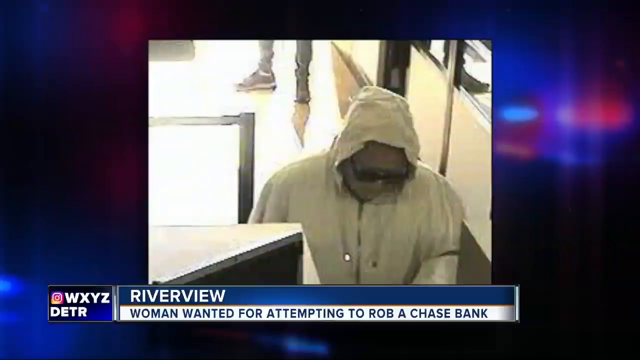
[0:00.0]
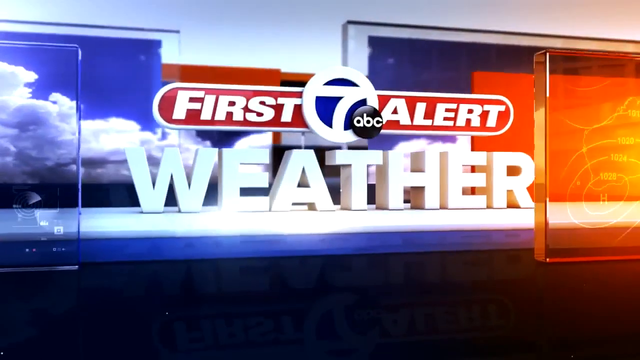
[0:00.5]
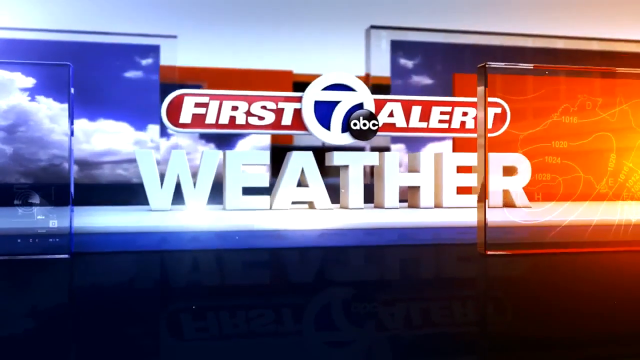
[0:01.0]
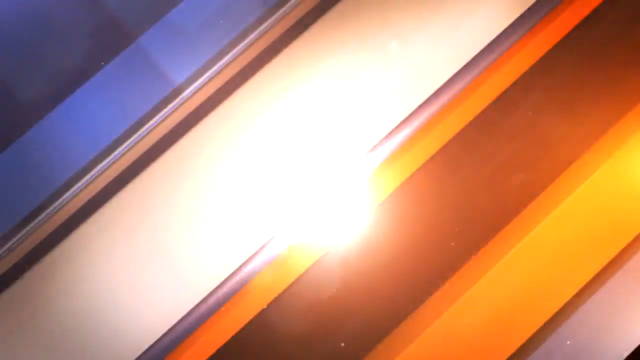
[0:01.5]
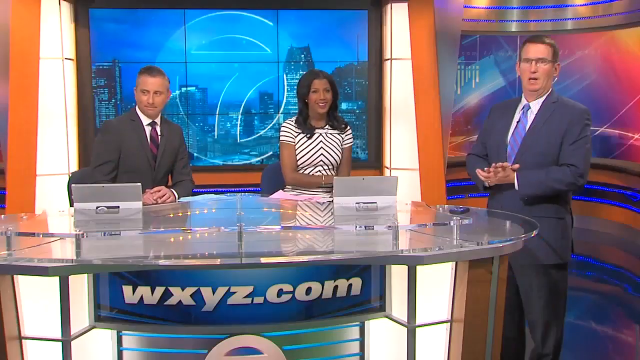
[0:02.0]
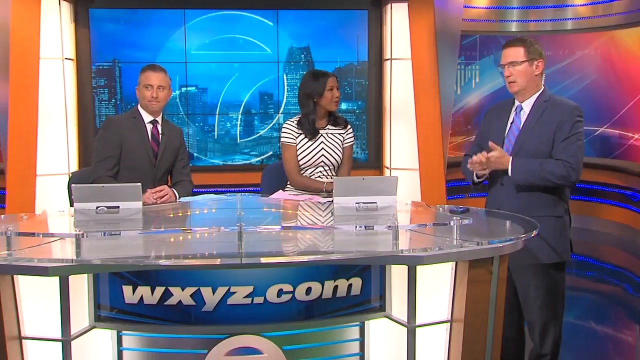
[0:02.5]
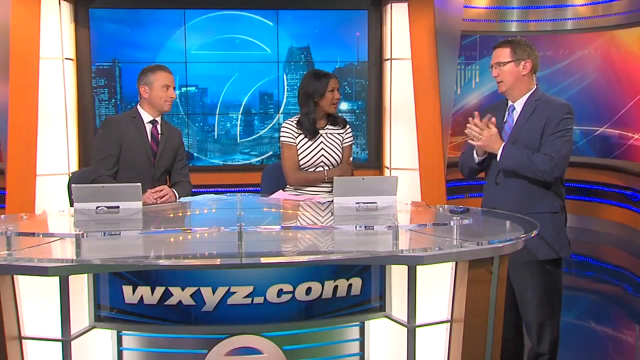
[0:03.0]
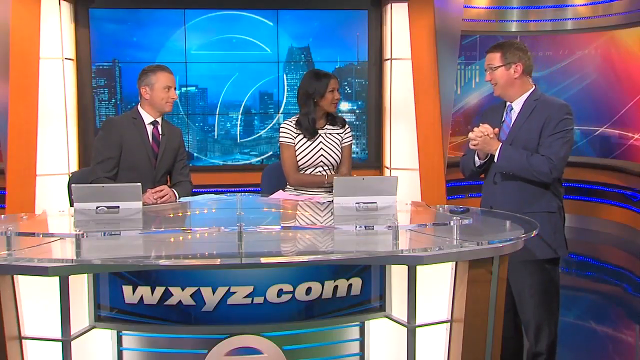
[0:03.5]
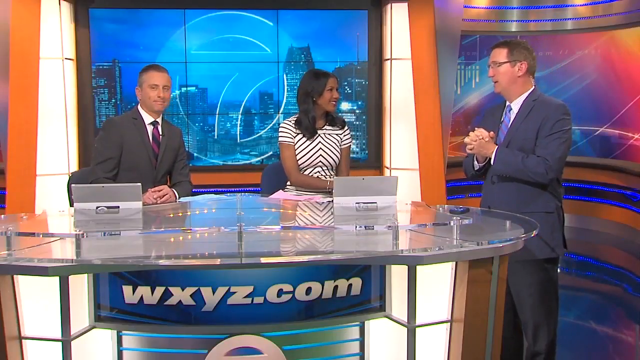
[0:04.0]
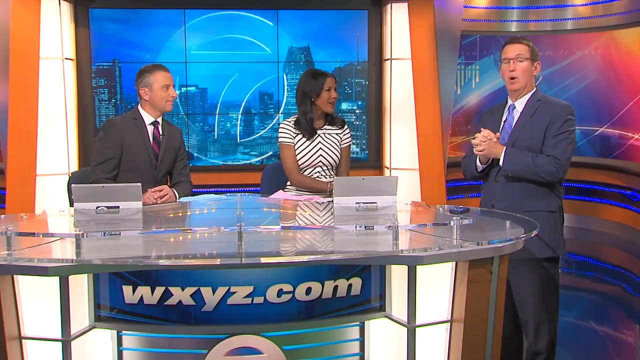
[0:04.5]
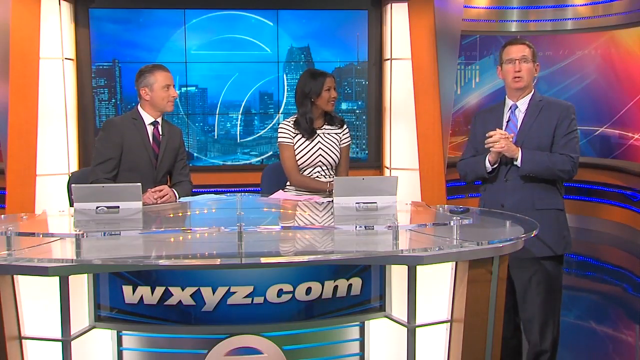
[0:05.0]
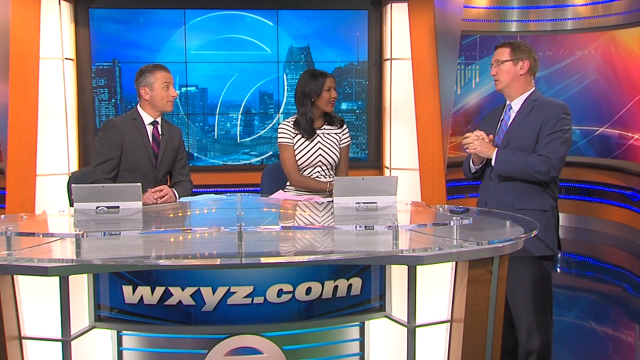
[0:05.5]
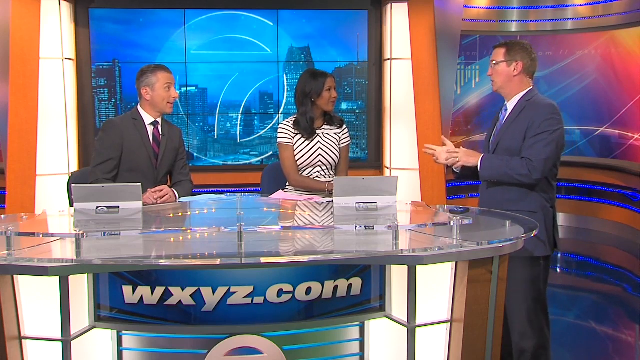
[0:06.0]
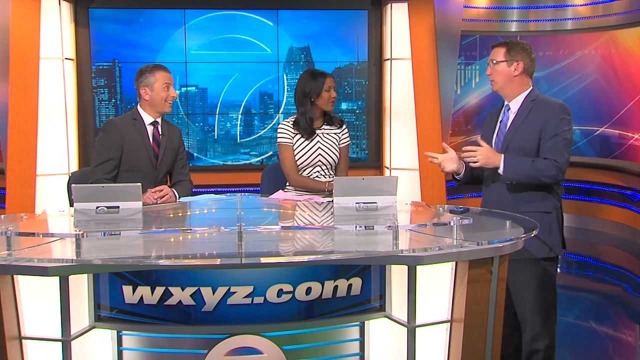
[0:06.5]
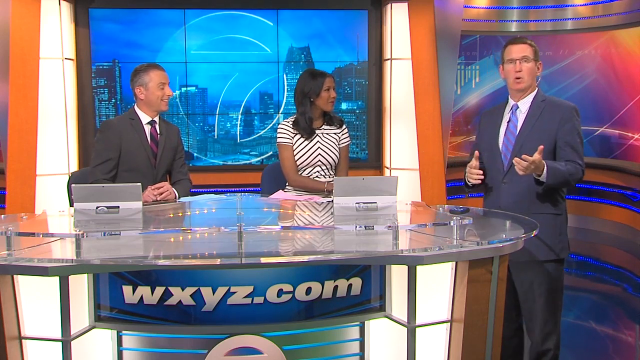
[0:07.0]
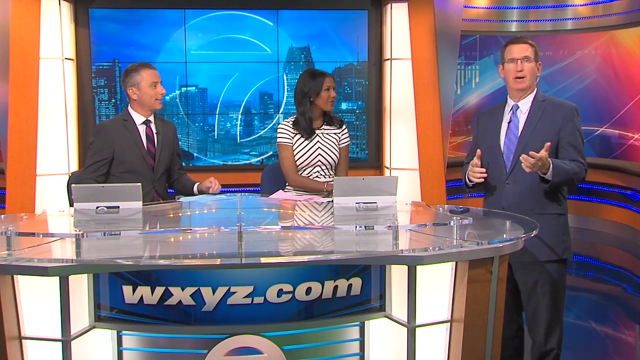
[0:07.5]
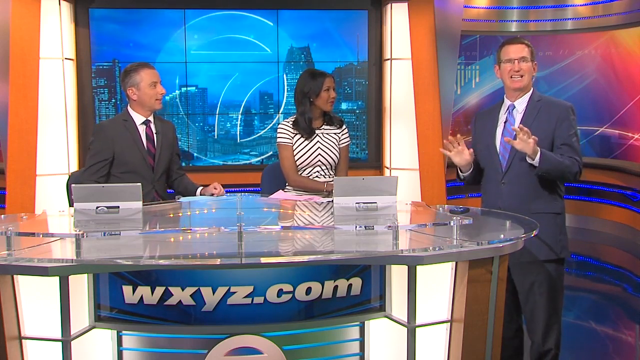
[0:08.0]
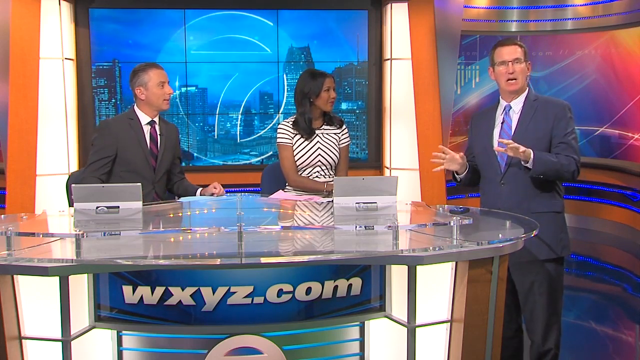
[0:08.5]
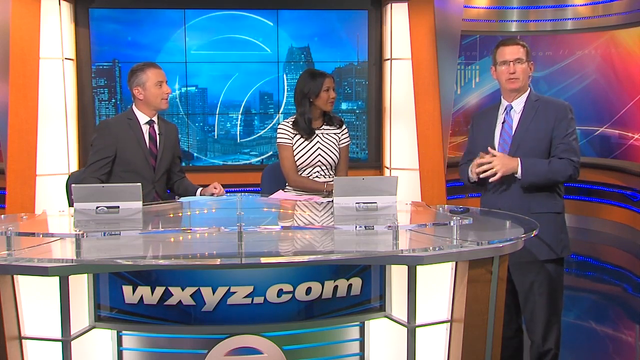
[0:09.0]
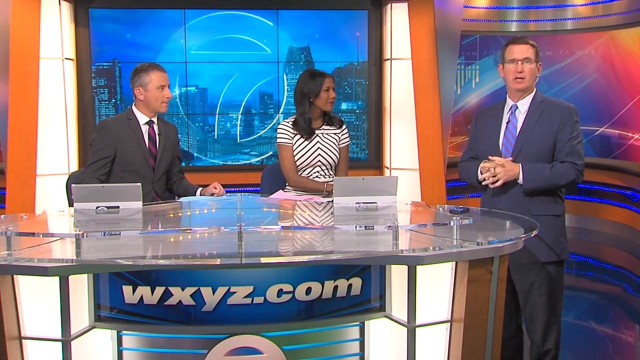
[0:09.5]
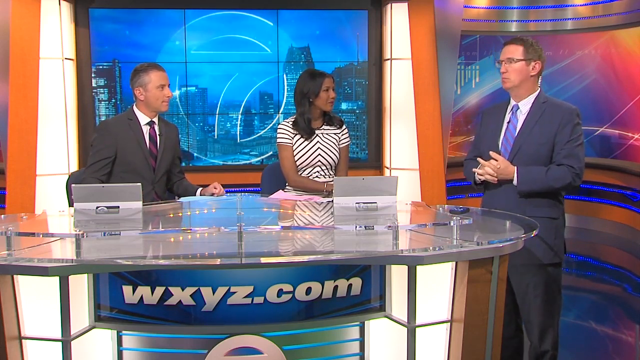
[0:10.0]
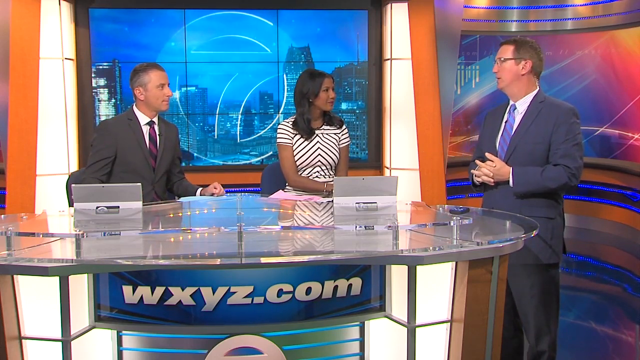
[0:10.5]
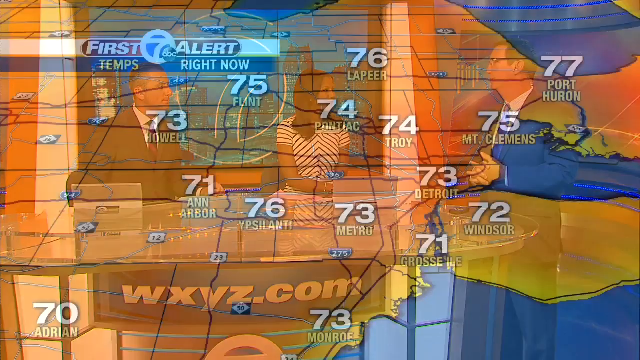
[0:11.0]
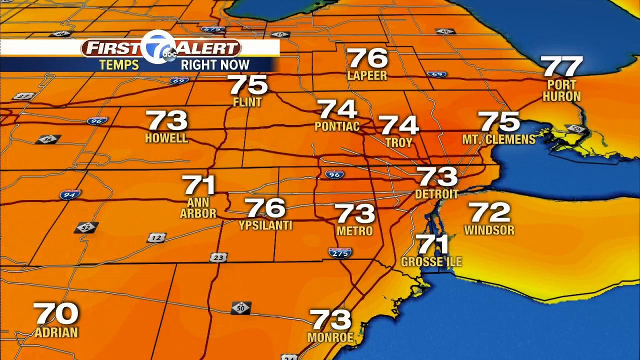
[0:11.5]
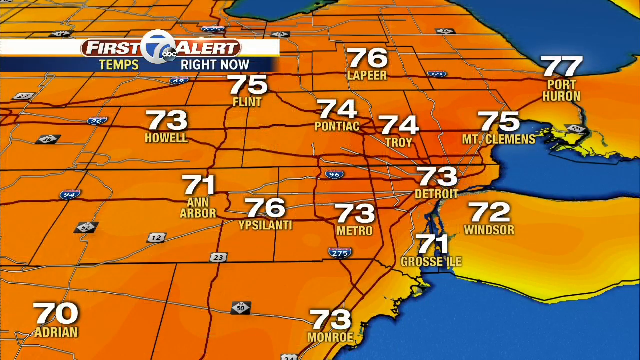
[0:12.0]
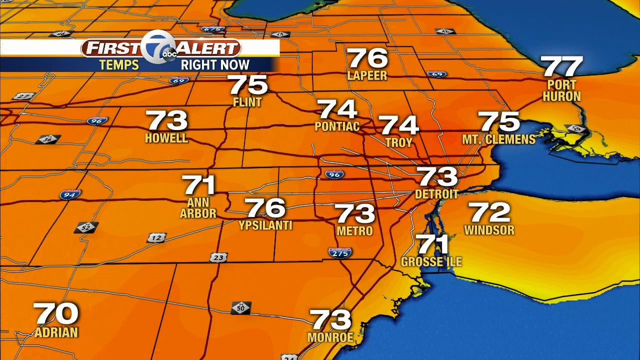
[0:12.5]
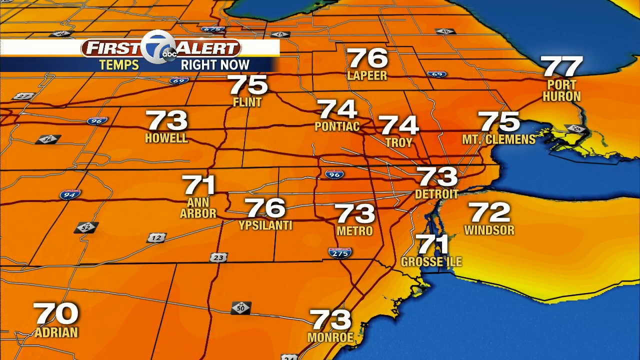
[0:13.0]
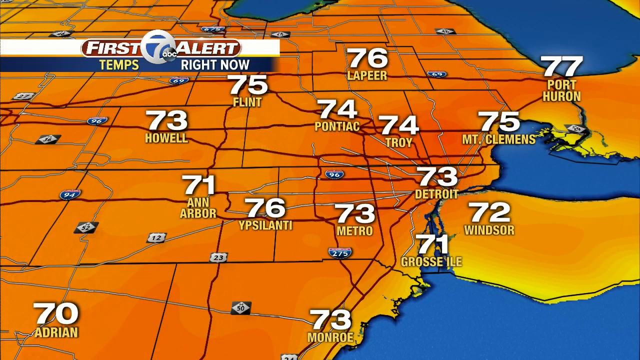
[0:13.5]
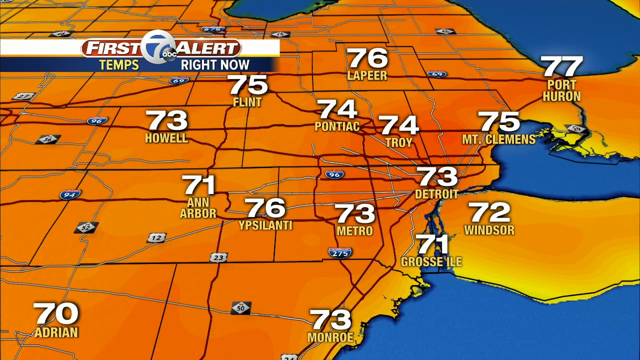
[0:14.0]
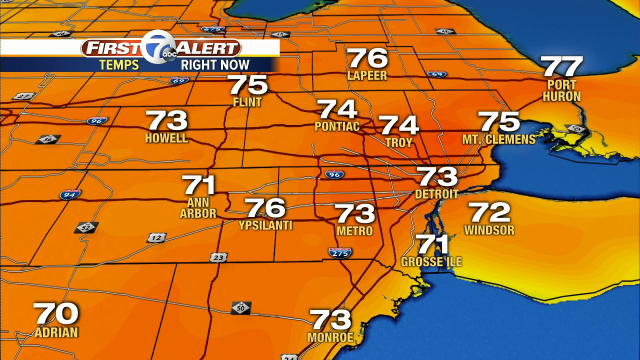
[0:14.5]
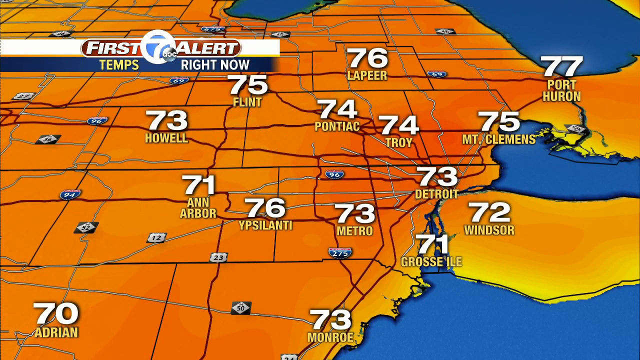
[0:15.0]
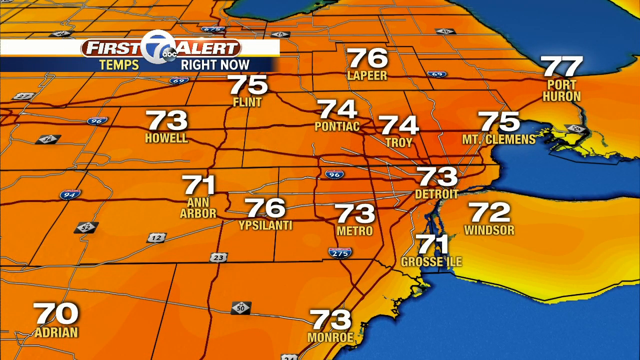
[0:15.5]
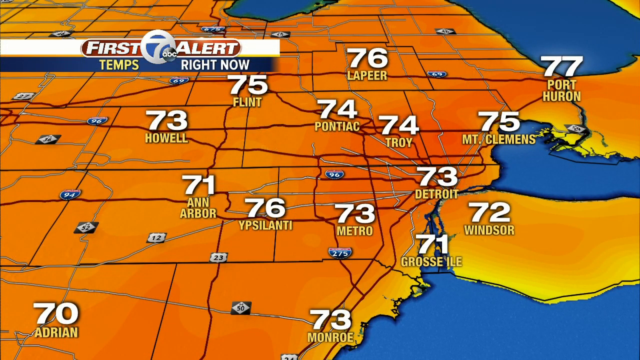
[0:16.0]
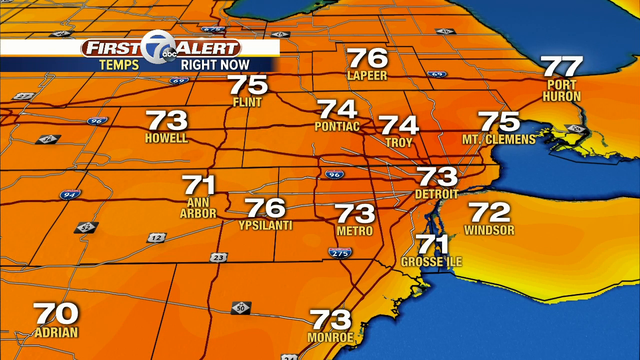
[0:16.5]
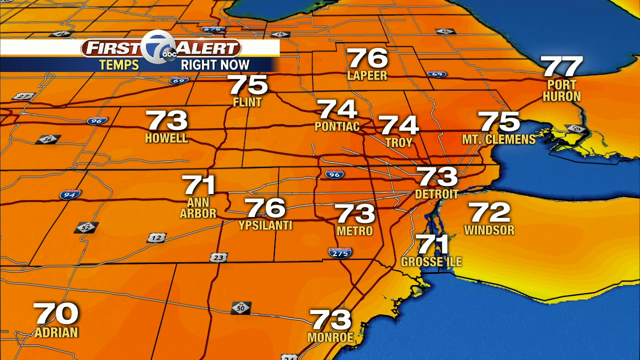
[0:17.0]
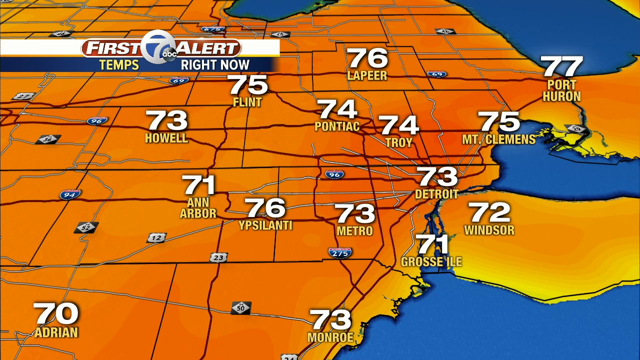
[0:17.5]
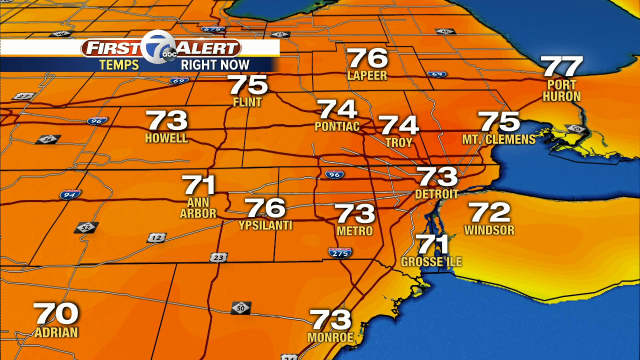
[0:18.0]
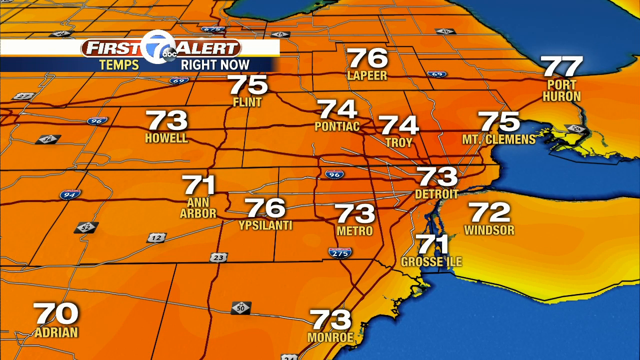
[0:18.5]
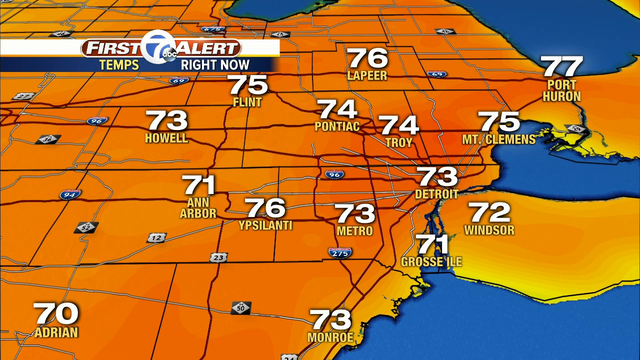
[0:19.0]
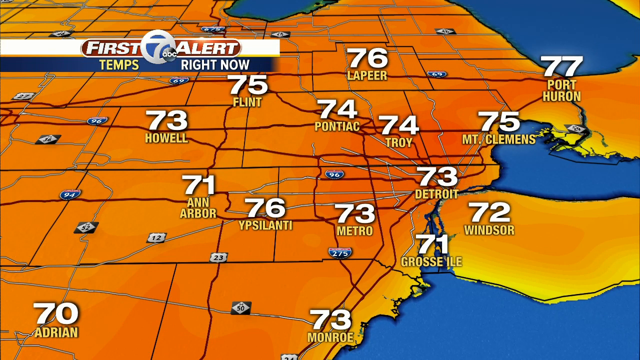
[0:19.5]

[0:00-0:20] Three people present a weather alert from wxyz.com: a man in a blue suit stands, while a man in a blue suit and a woman in a striped dress are seated. A story covers a woman wanted for attempting to rob a Chase bank in Riverview. In security footage, the woman wears a white hoodie jacket and sunglasses, and a person who looks like a man stands behind her. The first alert temps right now segment follows, where temperatures appear high and no rain or cold weather seems to be expected.